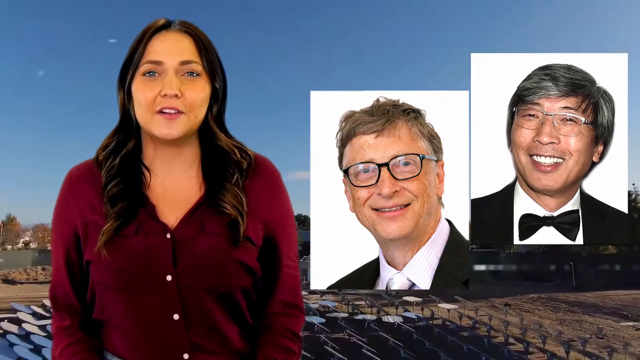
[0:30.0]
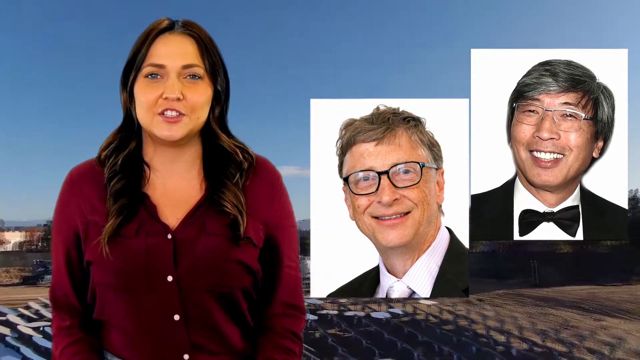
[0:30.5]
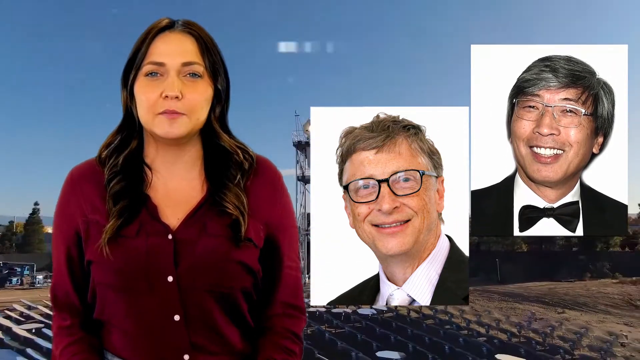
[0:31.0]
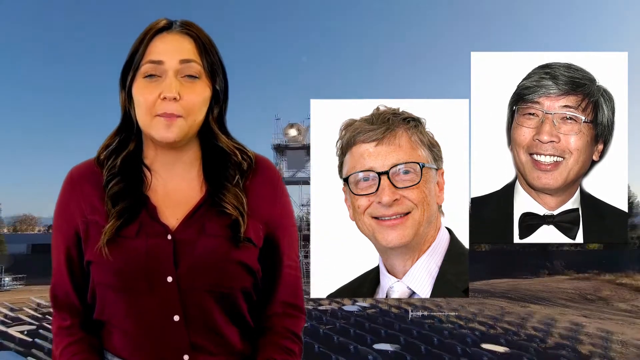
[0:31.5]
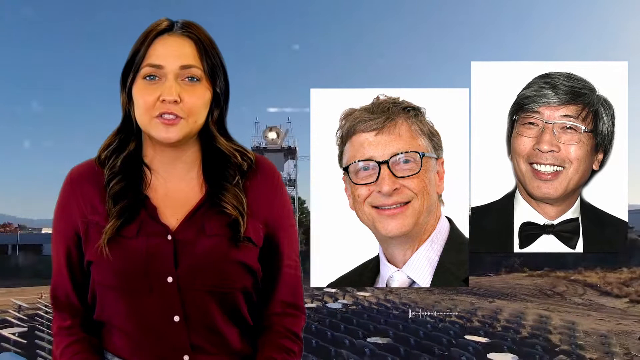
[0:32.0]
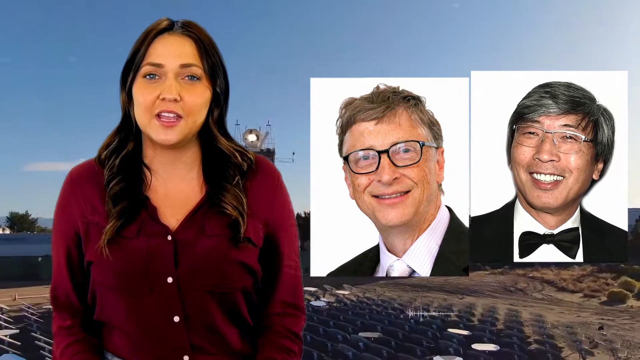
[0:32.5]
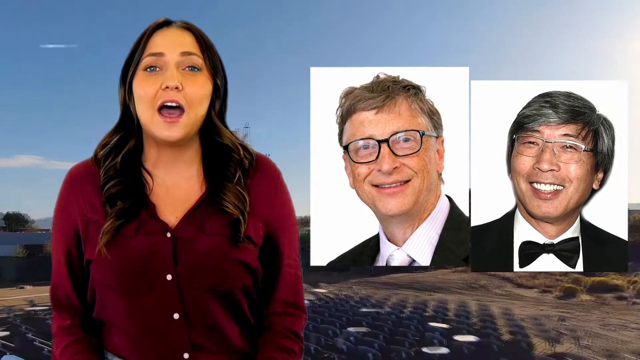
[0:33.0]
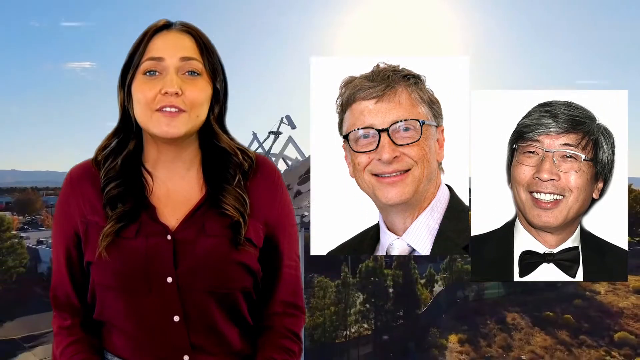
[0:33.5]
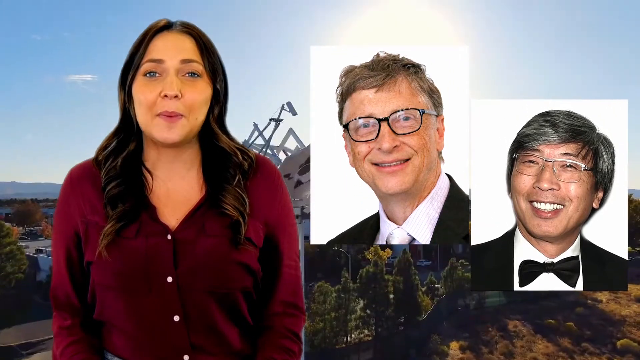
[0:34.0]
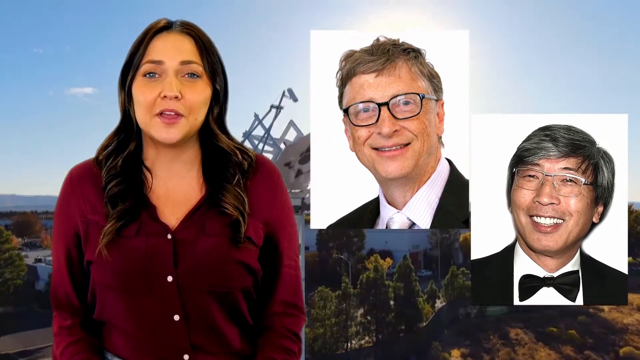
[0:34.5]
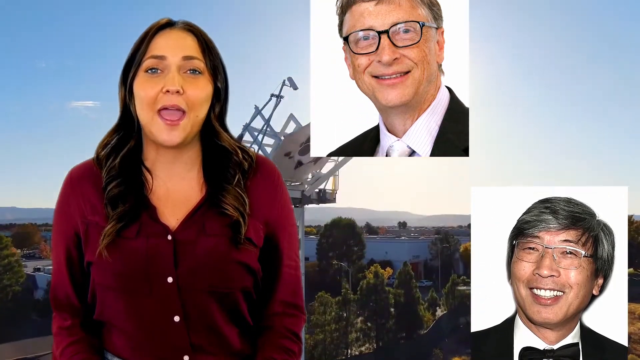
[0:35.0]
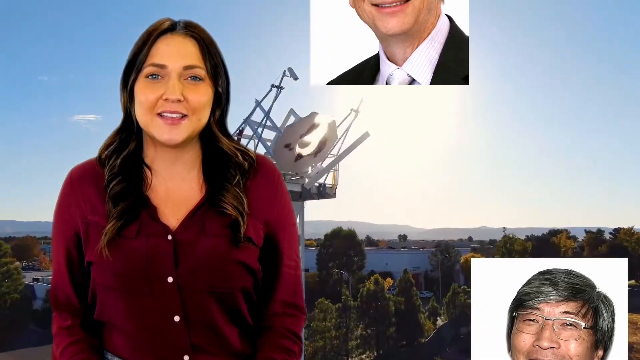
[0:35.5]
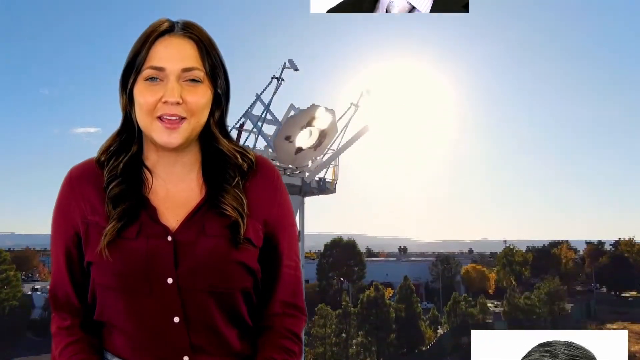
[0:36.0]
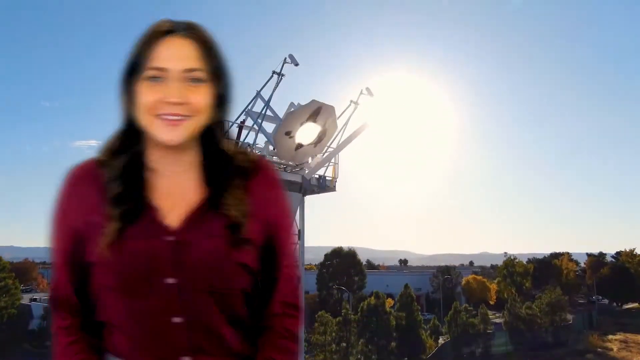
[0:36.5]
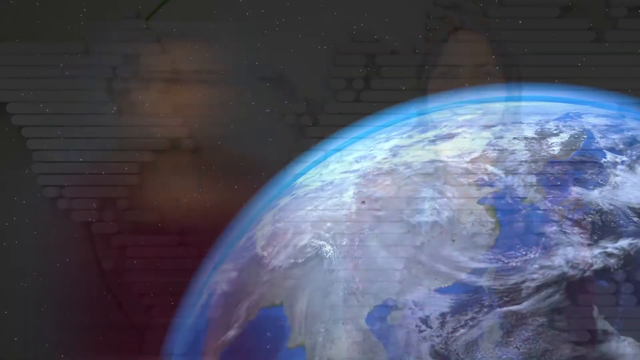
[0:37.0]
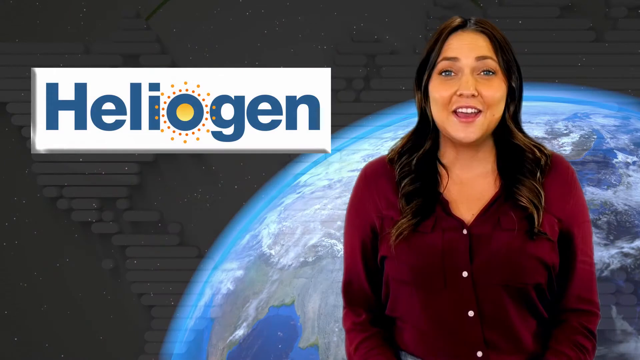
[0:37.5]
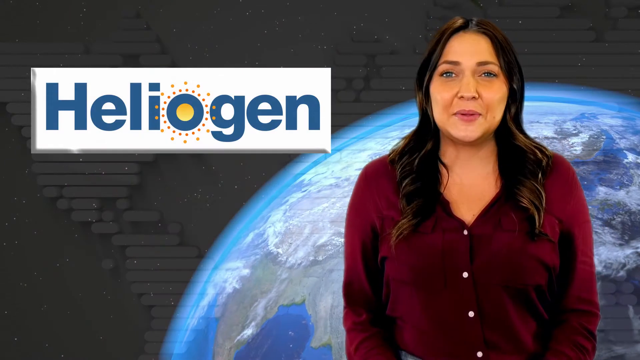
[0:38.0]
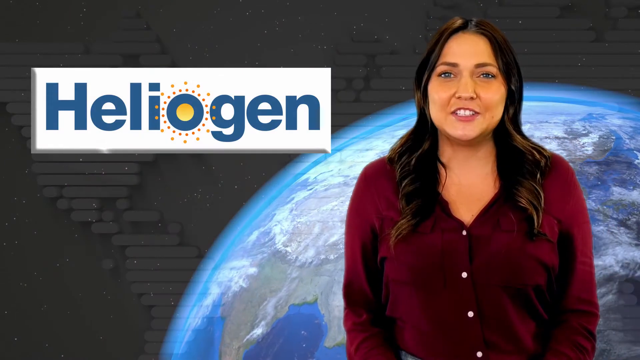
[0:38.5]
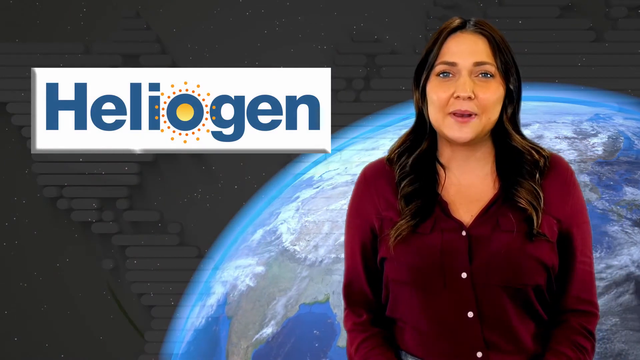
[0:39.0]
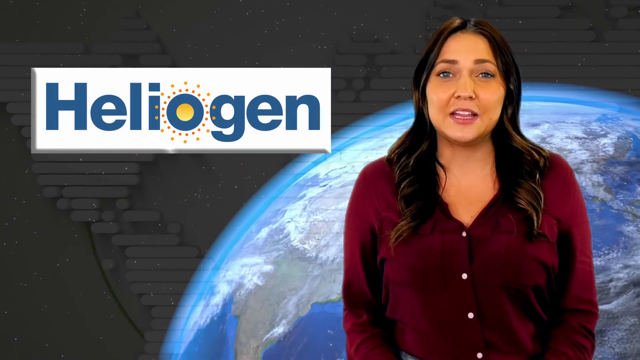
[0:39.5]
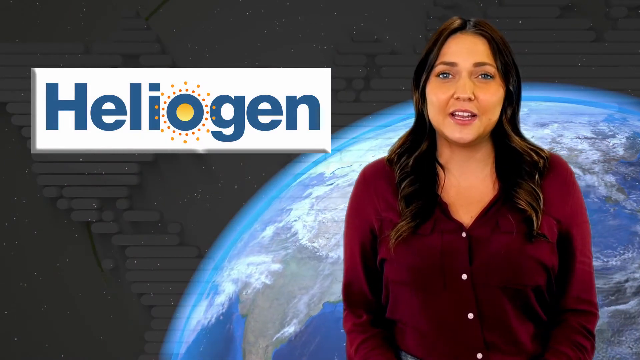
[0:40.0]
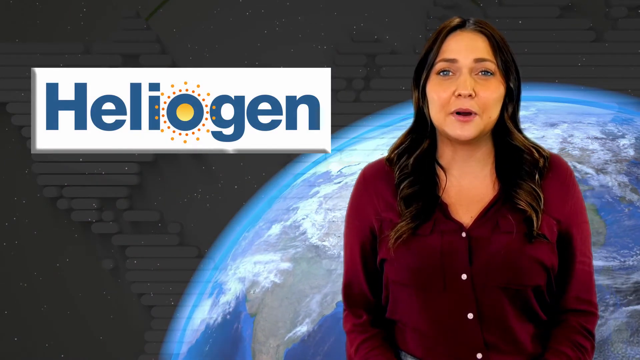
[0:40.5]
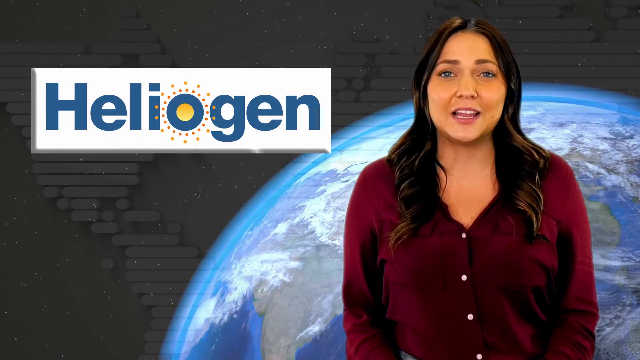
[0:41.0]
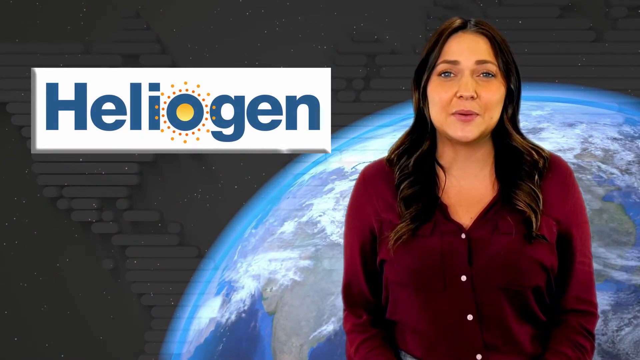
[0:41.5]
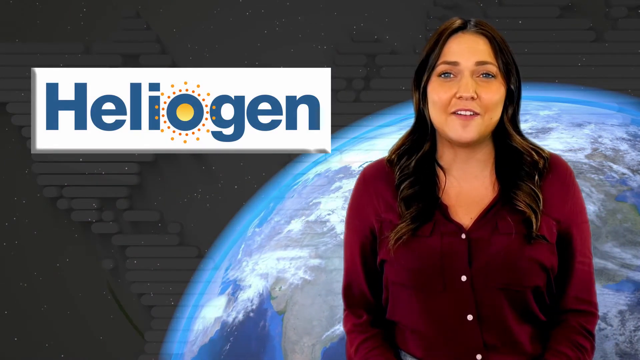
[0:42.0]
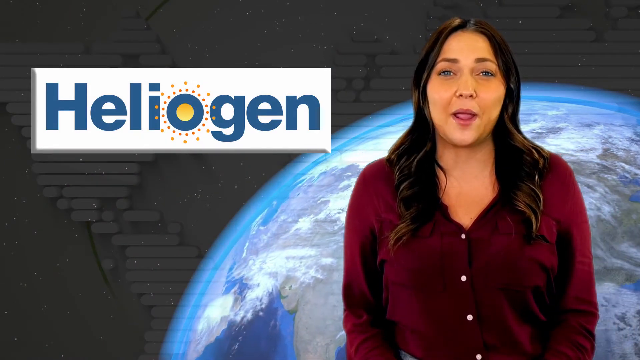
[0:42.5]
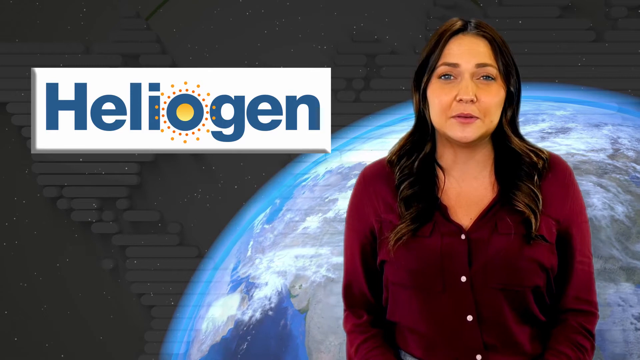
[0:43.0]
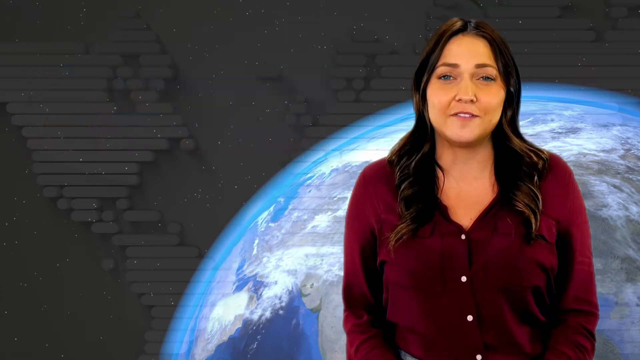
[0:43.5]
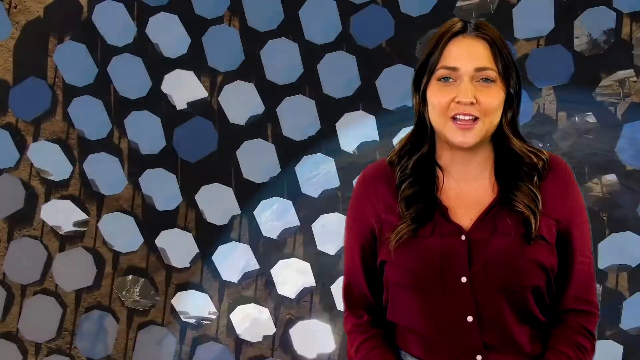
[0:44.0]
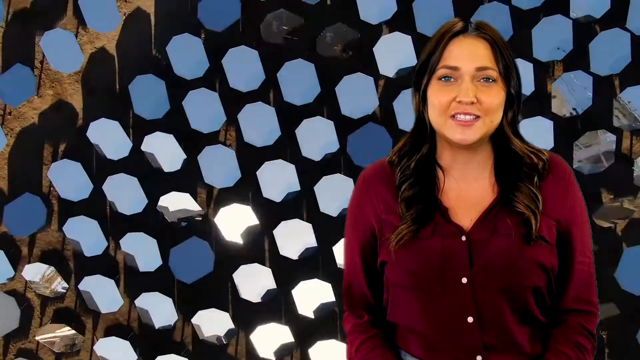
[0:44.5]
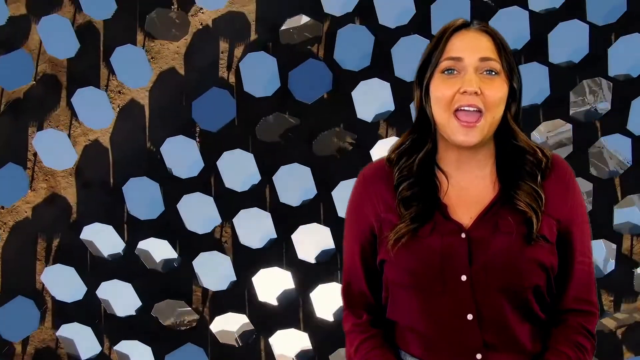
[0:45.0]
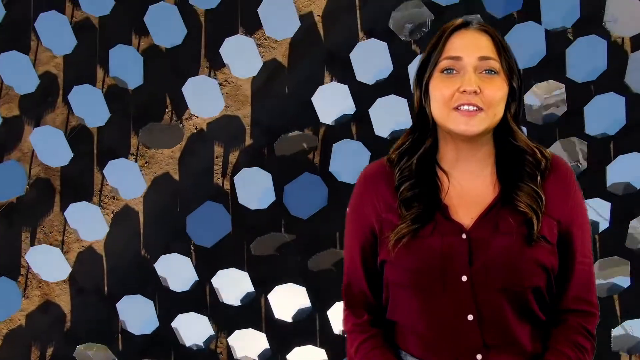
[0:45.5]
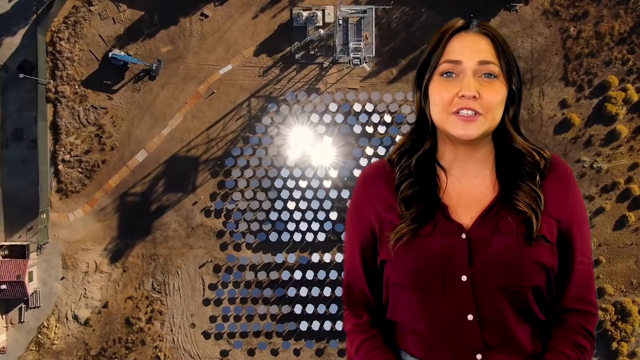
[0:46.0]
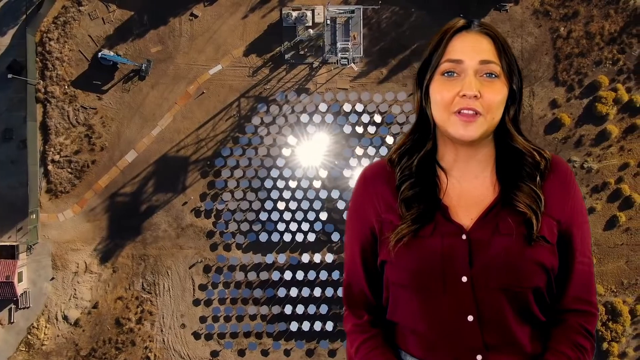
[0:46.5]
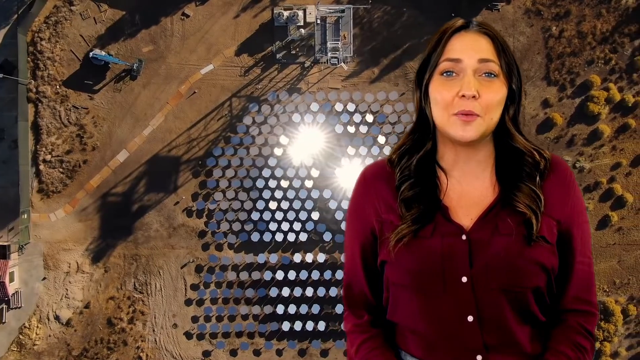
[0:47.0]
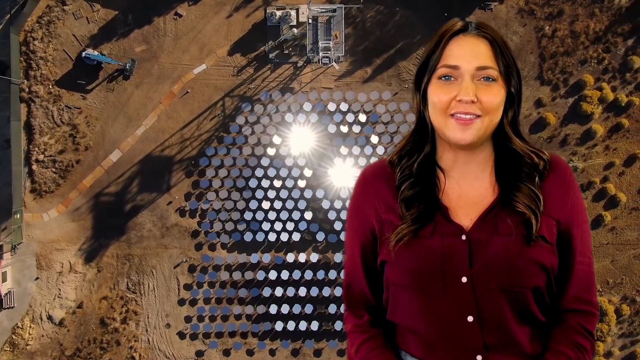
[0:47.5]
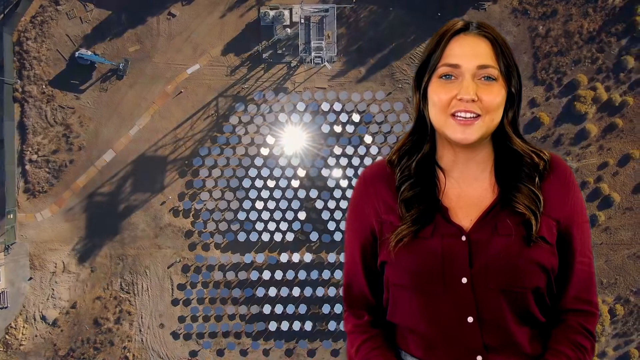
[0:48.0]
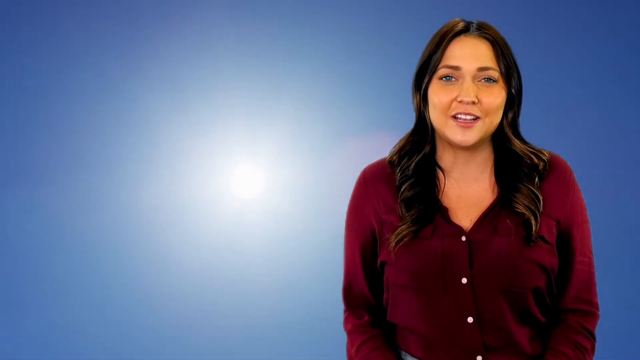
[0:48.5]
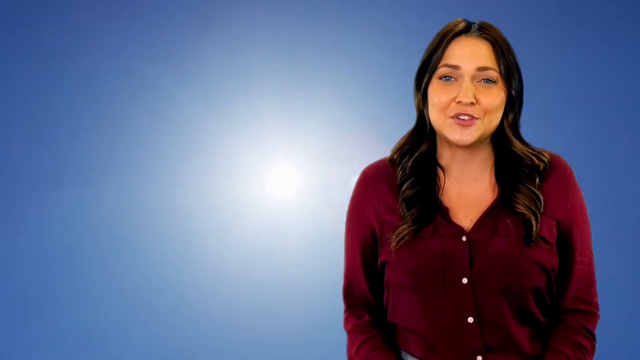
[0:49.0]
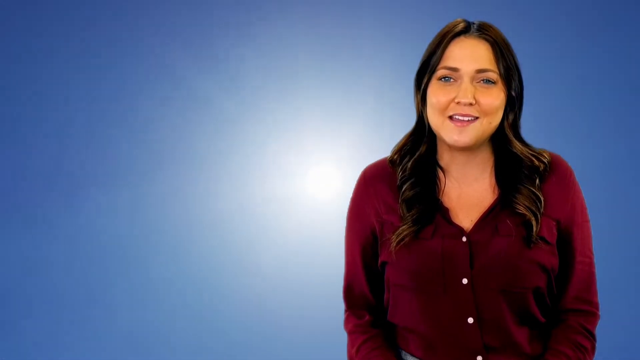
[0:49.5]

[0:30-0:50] The name Heliogen is shown.